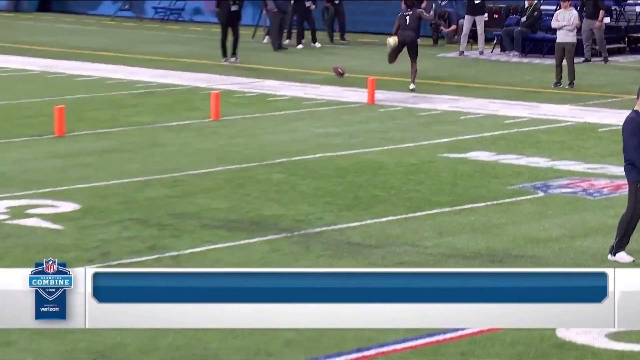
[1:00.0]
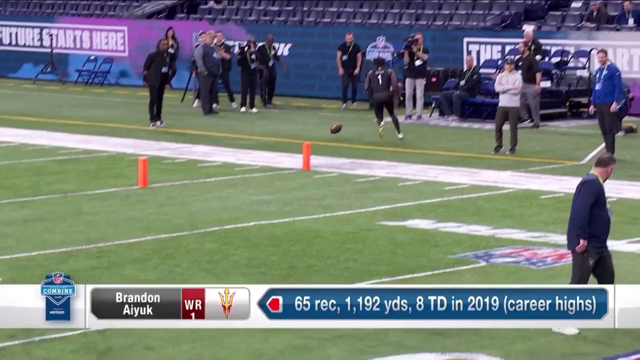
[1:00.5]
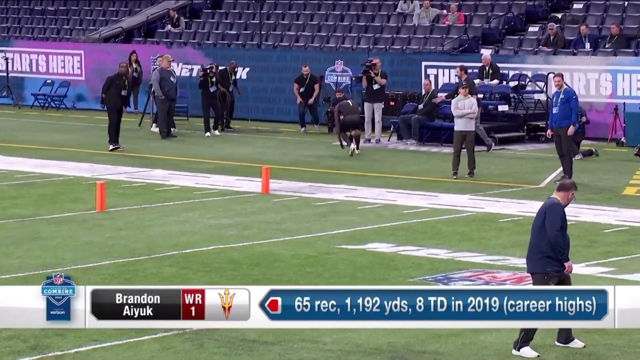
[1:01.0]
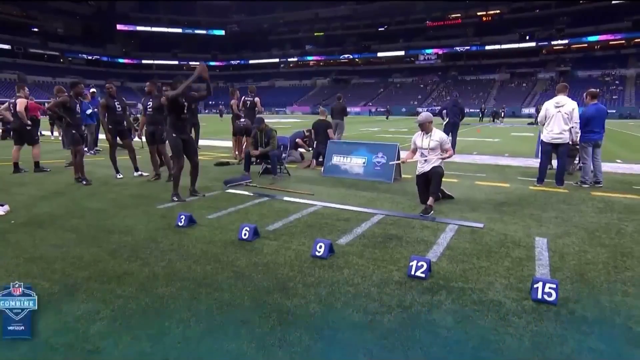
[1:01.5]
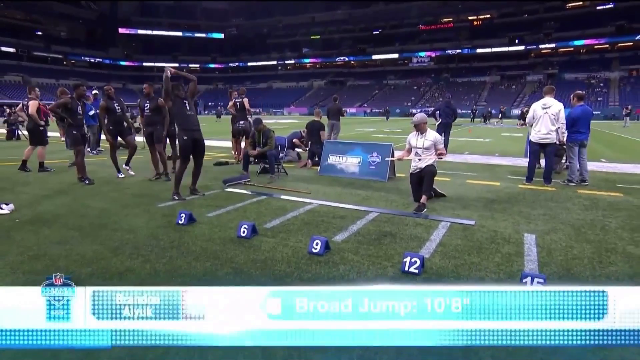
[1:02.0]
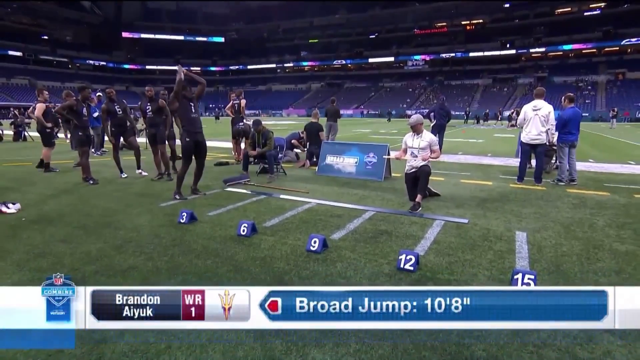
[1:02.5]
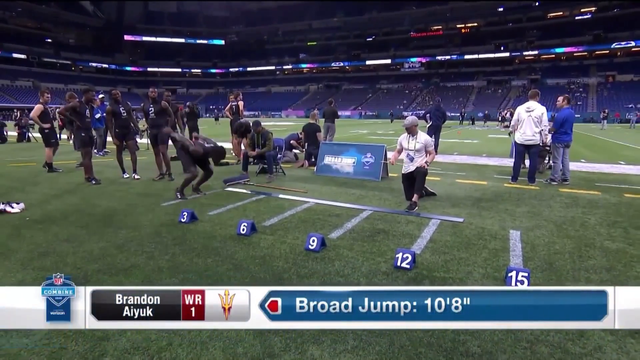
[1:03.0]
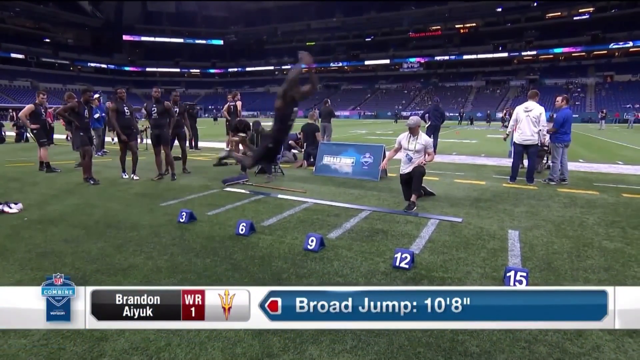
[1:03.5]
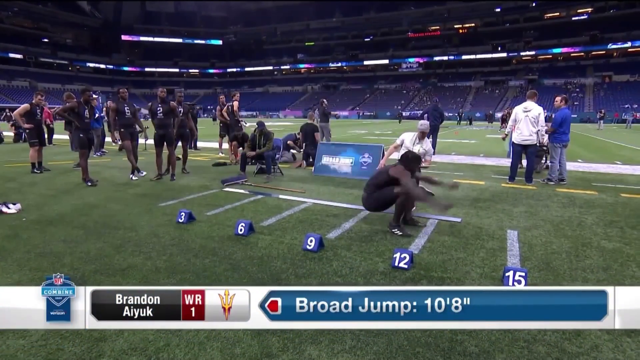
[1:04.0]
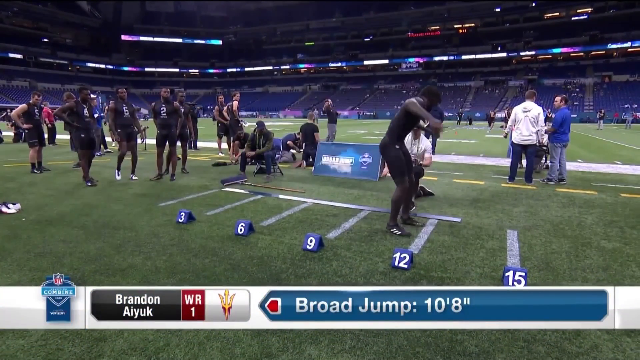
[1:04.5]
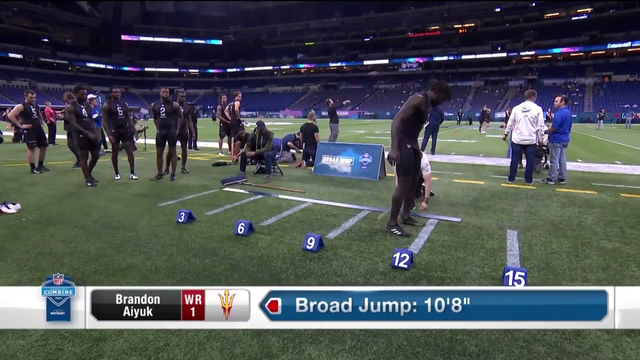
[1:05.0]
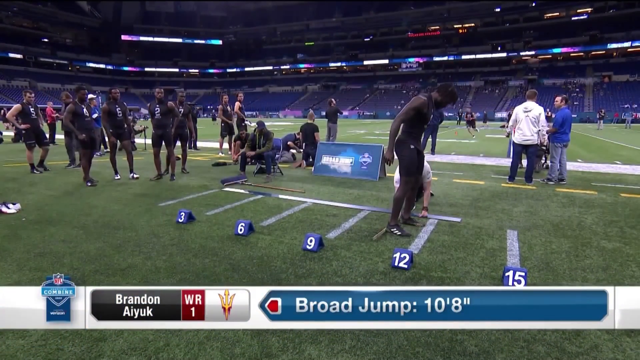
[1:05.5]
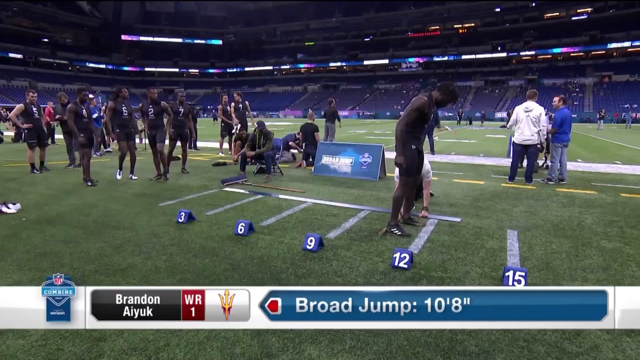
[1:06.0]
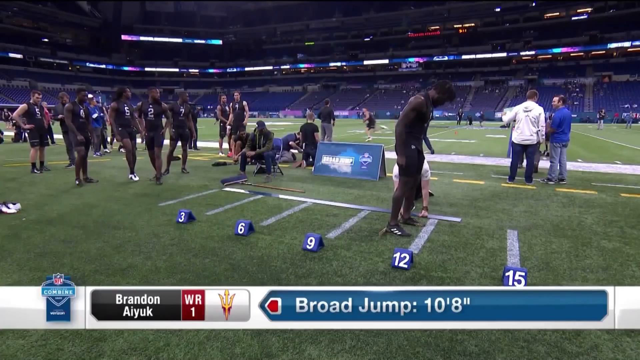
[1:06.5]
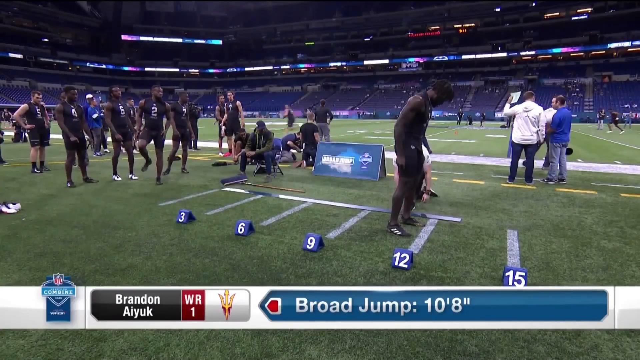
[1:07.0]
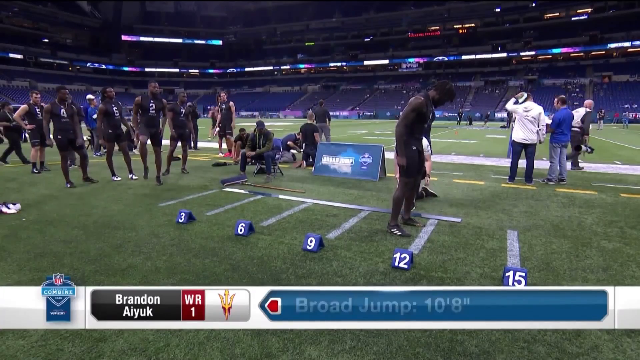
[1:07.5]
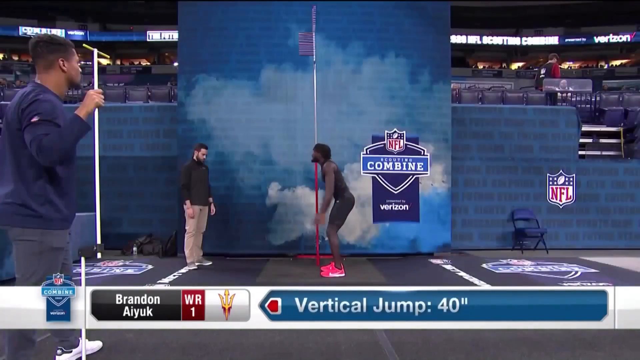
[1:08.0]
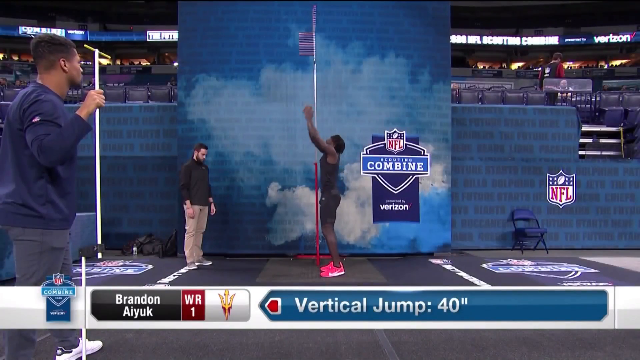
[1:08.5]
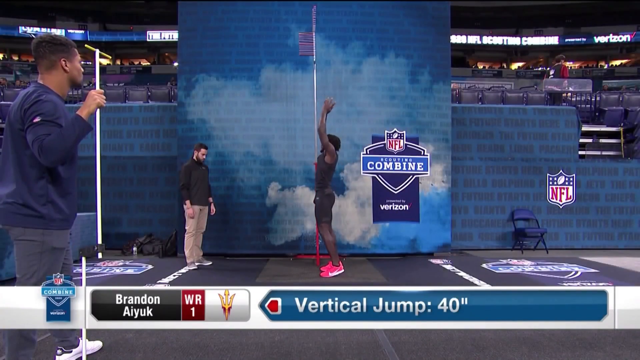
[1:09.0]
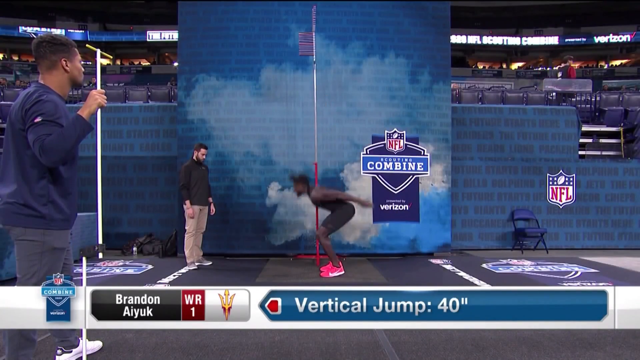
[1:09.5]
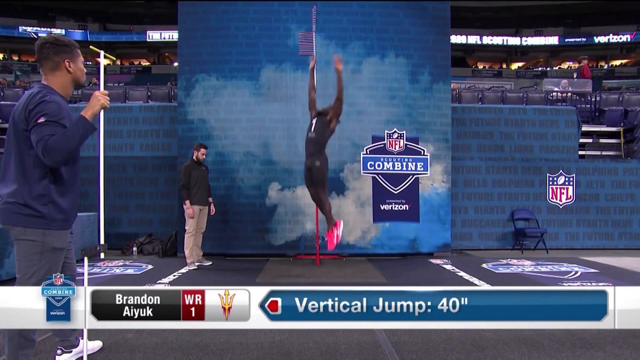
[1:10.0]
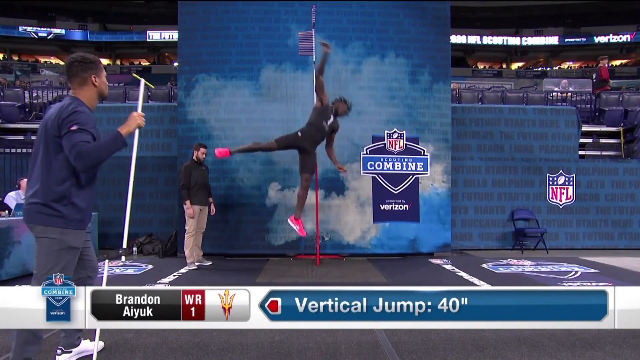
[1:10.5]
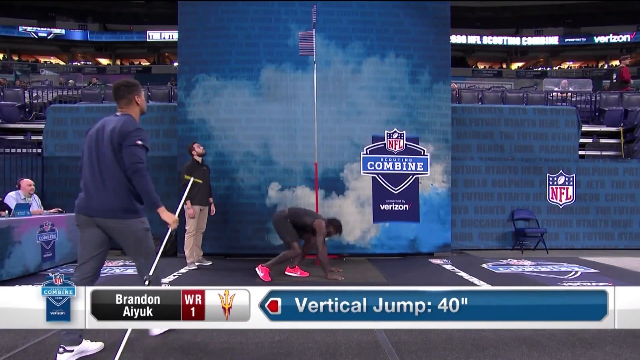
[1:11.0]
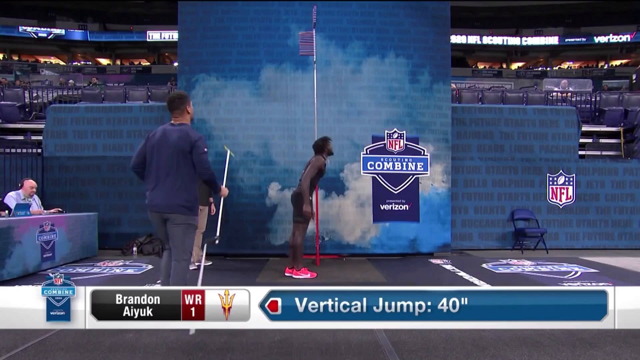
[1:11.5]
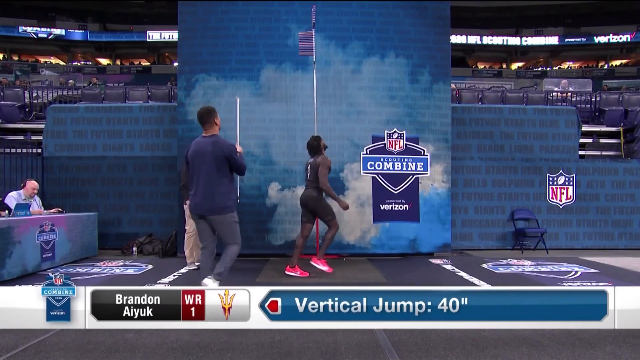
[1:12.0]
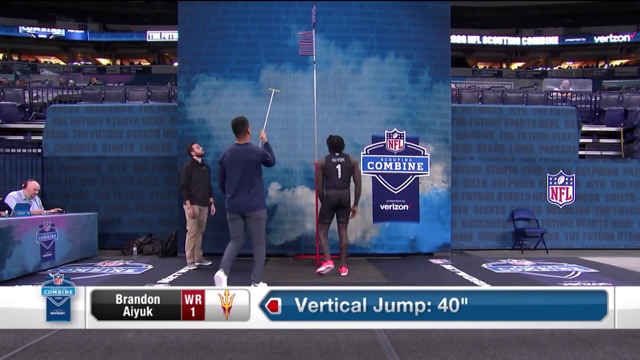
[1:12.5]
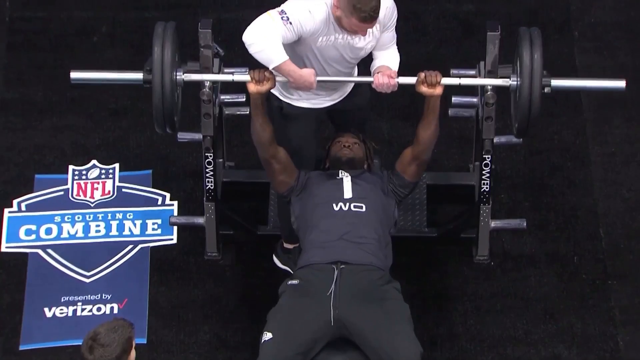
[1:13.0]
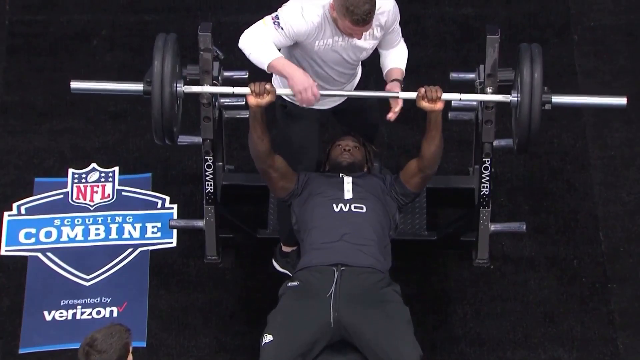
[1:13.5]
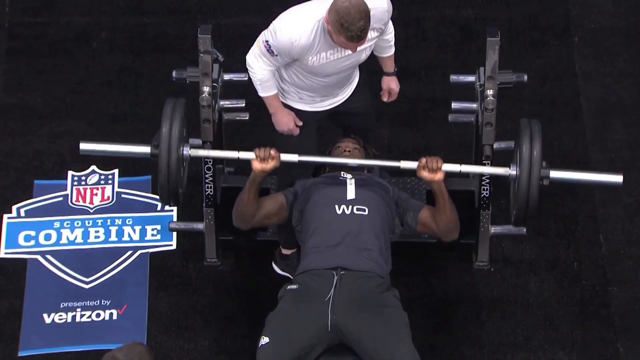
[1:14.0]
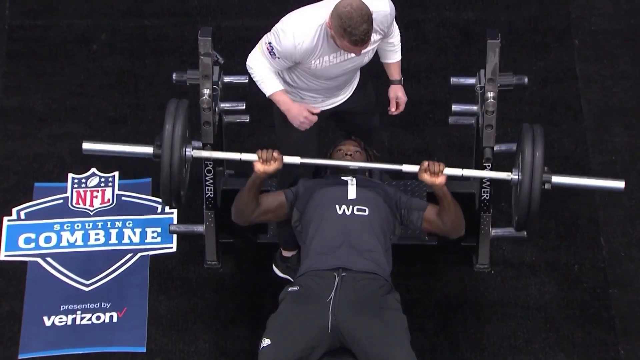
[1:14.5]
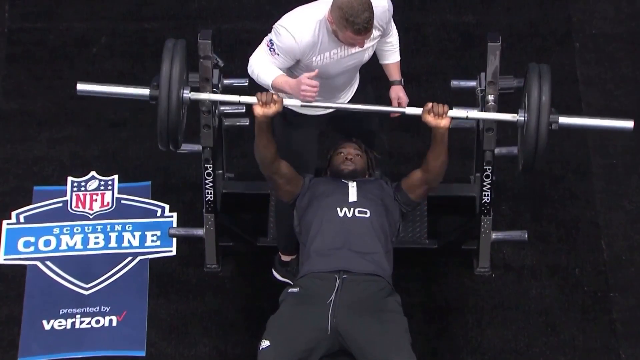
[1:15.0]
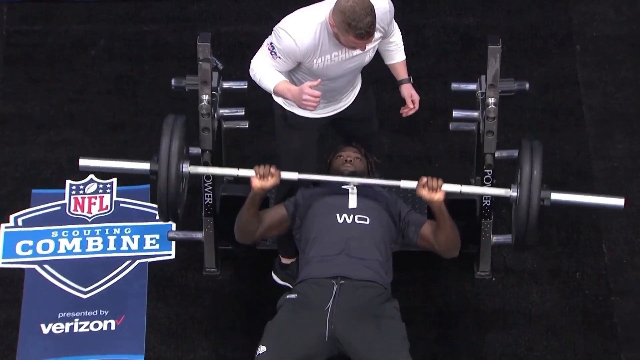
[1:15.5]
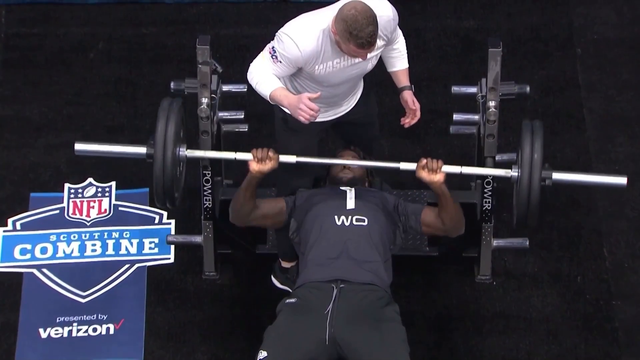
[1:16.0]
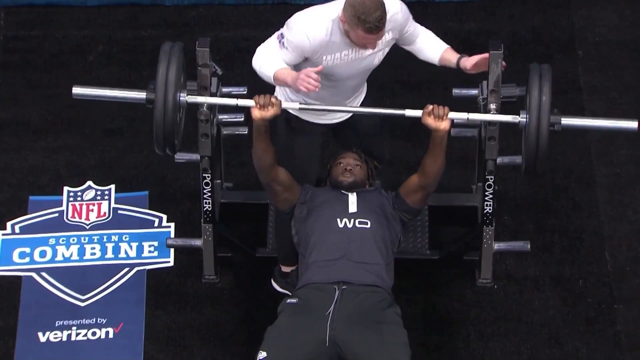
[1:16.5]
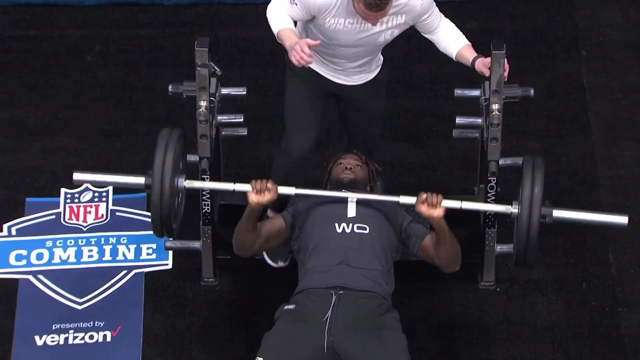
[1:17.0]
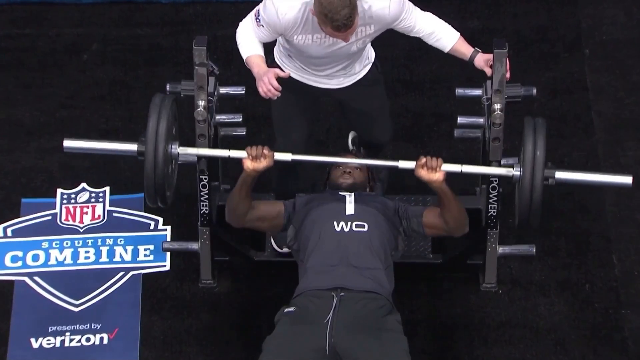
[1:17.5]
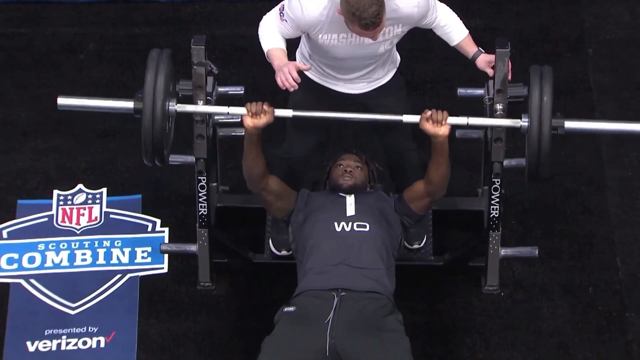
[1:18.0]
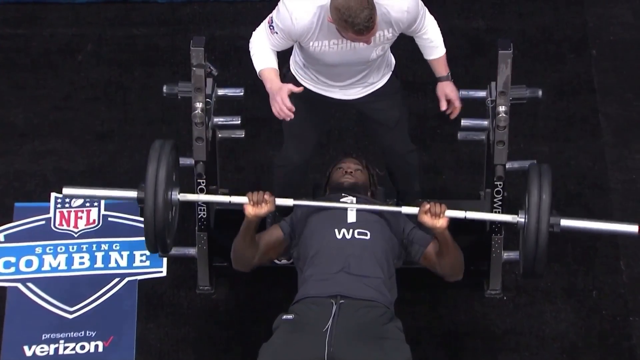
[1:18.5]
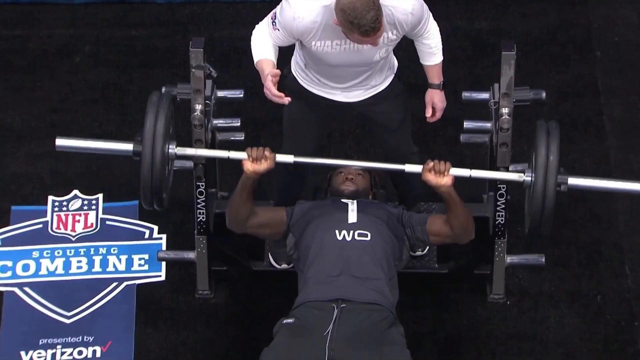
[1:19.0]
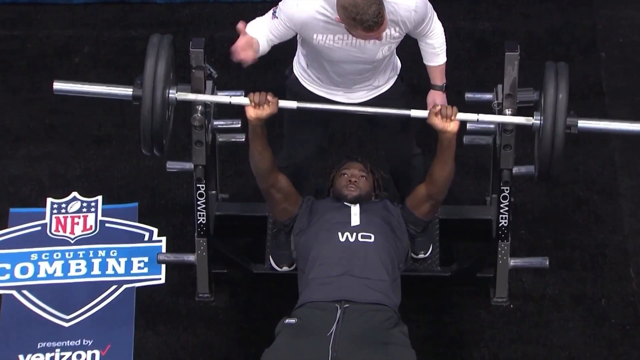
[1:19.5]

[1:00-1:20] At the NFL Combine, the person working out on the field does a standing jump. He stands to the left of the white lines, lifts his hands up above his head, then brings them down and throws them in front of him as he jumps as far as he can. Next he does a high jump: standing still underneath something, he puts his hands up above his head, puts them down, then jumps up into the air and tries to grab something hanging above him, possibly a bell. He then does weightlifting, lying on a bench with both hands on the barbell, lowering it down to his chest and pushing it up into the air in several repeated lifts.